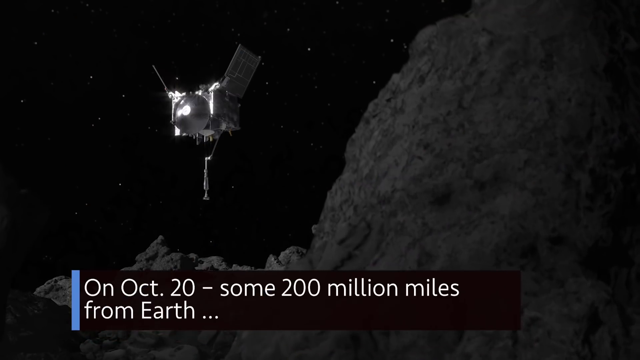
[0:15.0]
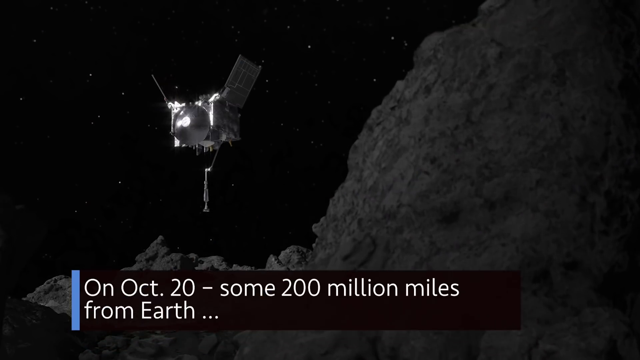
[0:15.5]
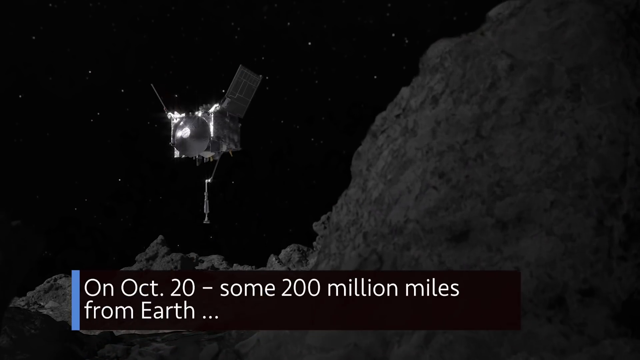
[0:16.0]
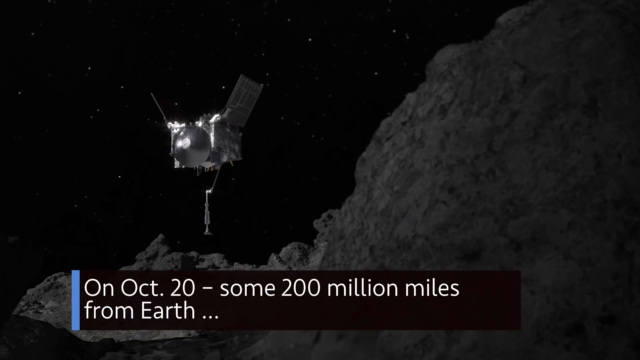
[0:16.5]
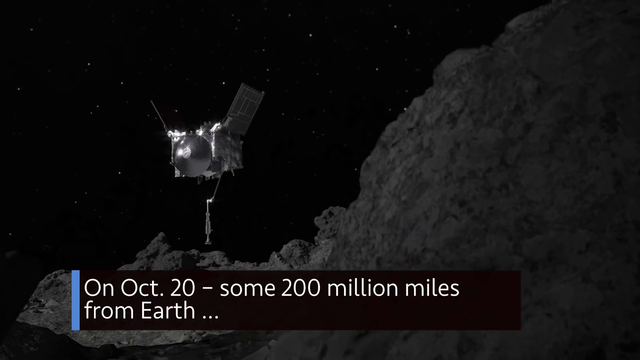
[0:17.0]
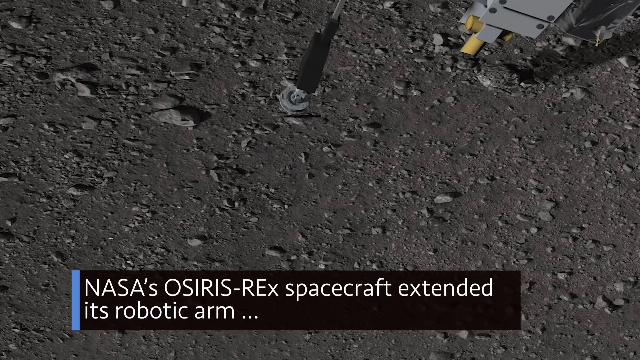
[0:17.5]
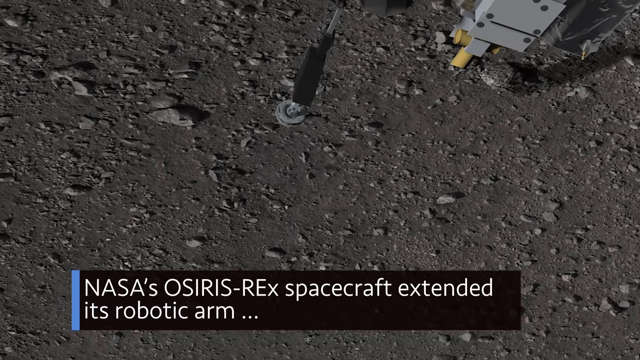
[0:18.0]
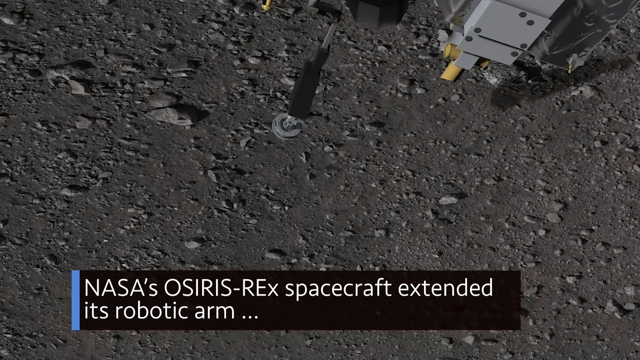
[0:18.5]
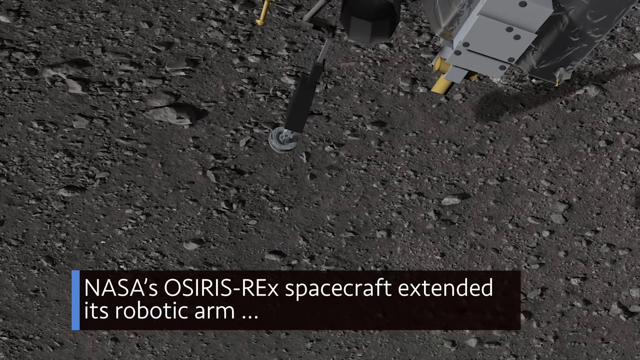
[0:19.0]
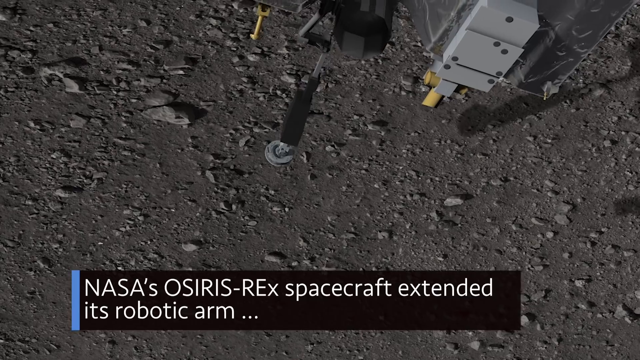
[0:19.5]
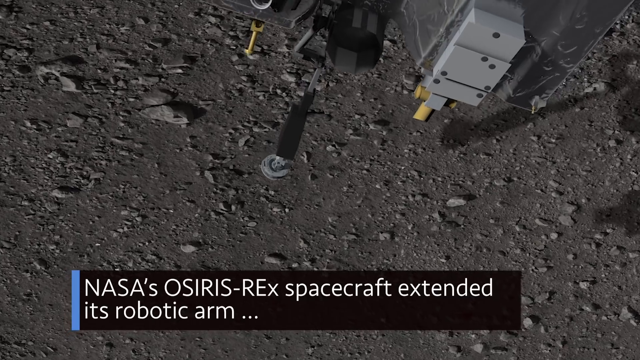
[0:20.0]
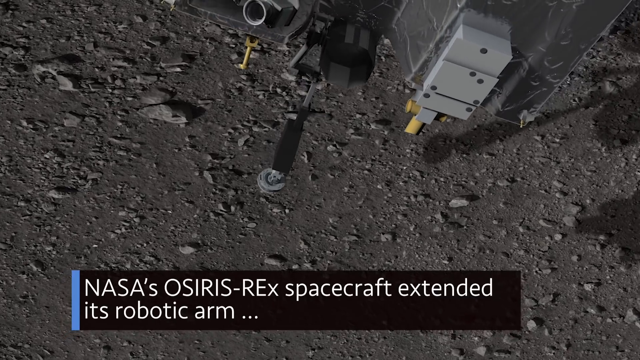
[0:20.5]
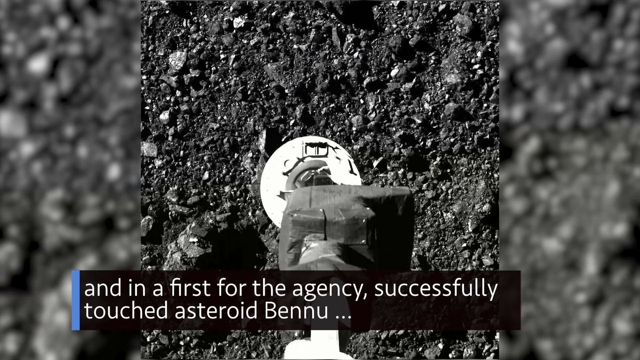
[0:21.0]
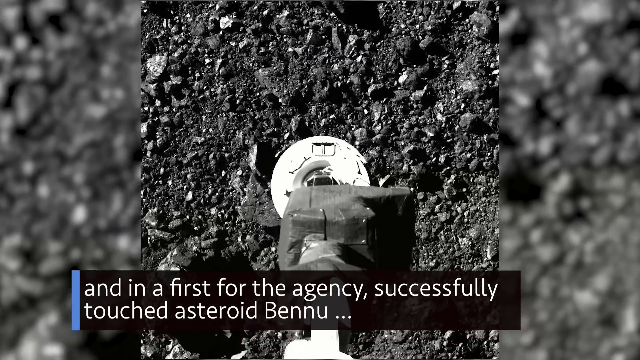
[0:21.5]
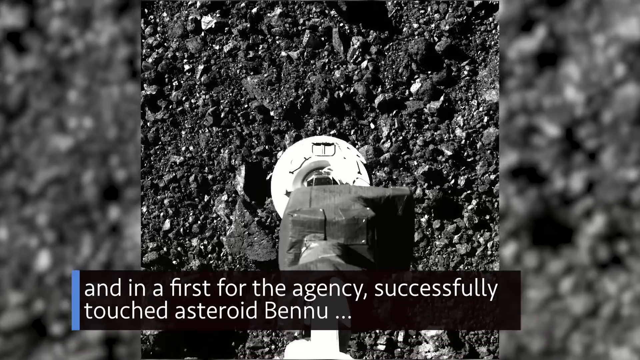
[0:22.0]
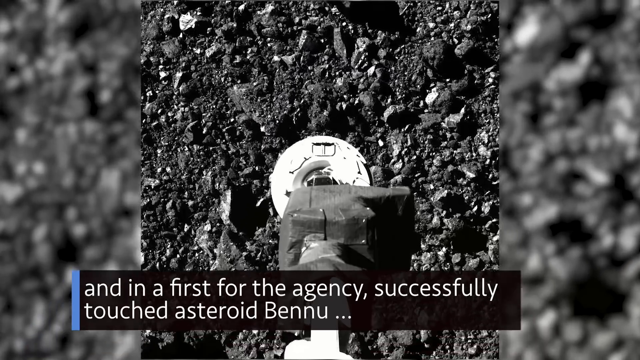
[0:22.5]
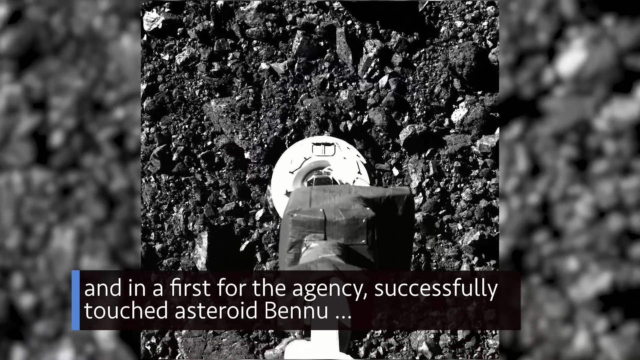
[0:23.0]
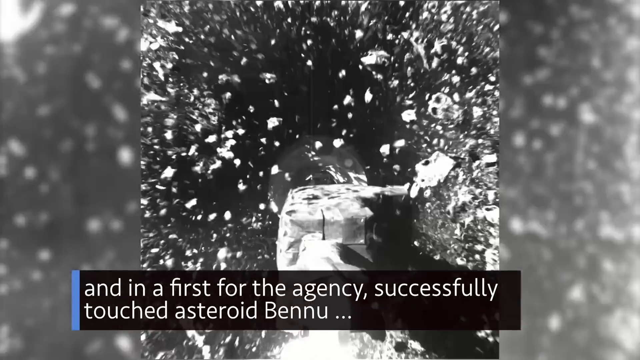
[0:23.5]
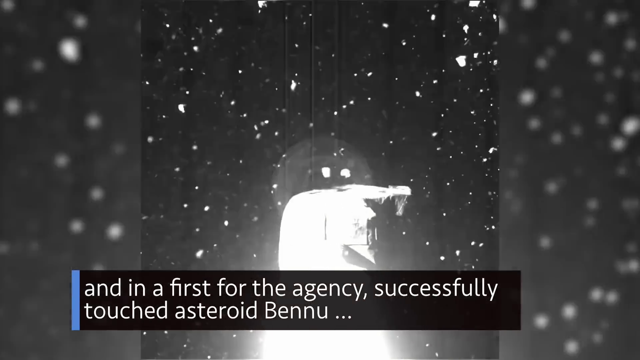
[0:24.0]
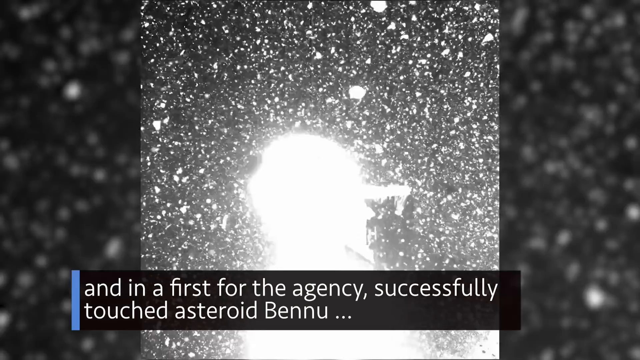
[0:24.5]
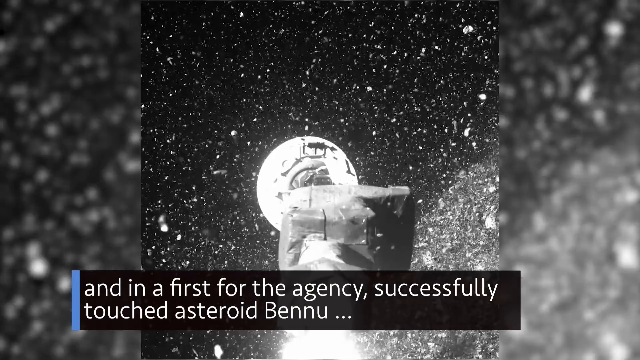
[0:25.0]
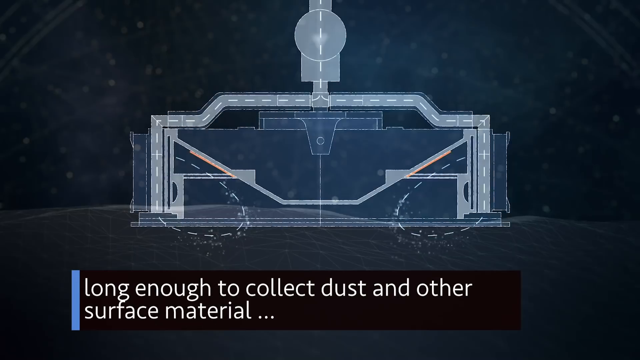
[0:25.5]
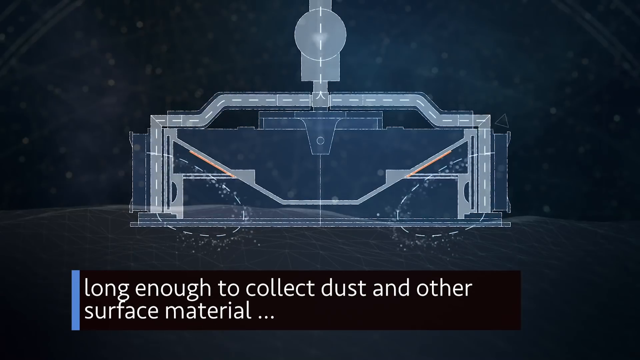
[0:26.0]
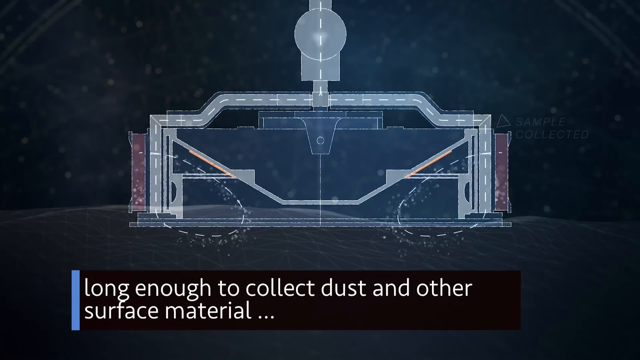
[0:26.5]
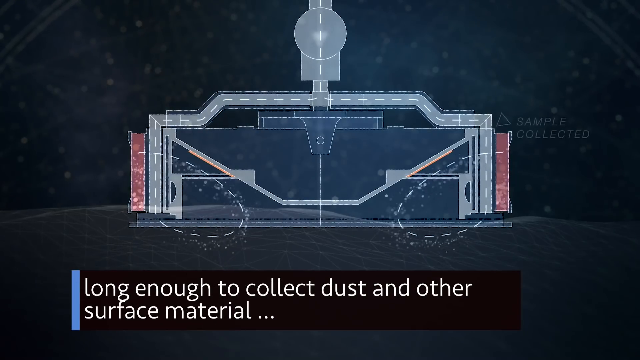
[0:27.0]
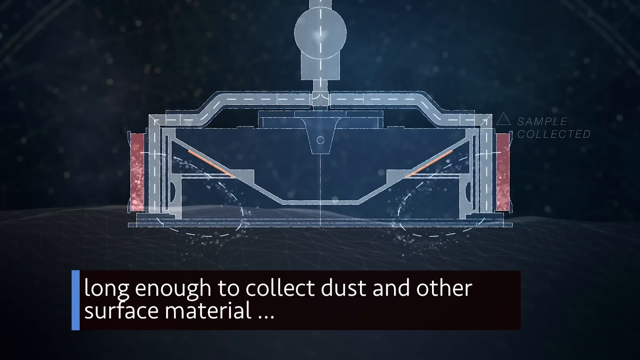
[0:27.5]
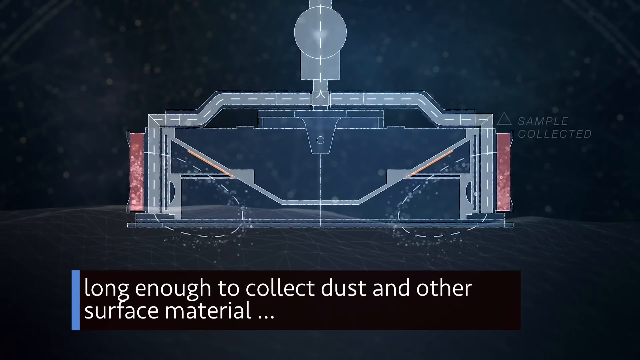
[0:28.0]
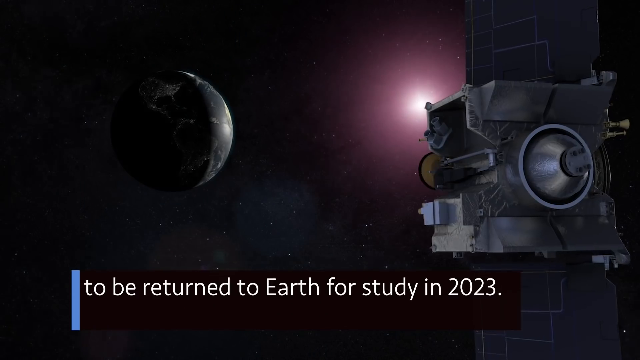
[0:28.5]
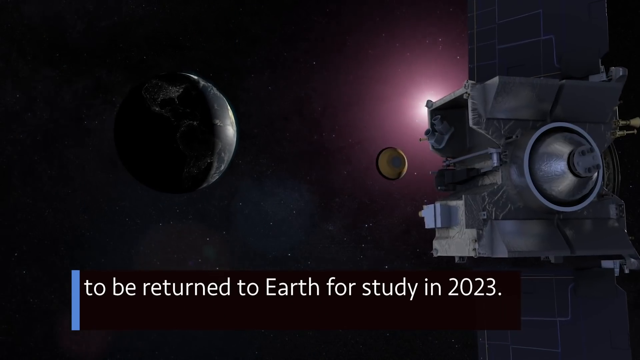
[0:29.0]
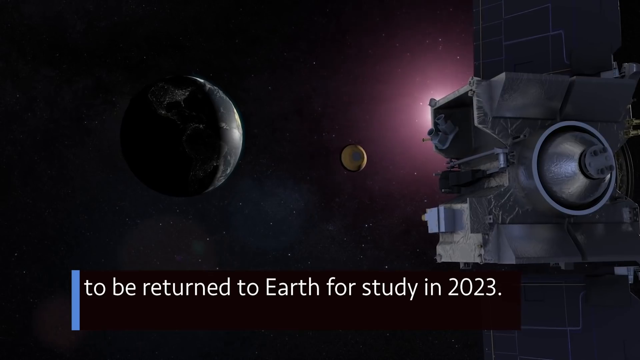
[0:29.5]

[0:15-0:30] The scene shows a mission to collect samples from an asteroid in outer space, in clearer detail. The spaceship lifts off and lands on the asteroid. A caption and a diagram show that the instrument that goes into the asteroid extends very deep into it to collect samples. Another caption states that the spaceship is over 200 miles away from Earth. No people appear, only the planet Earth, the spaceship and the asteroid, with a vast number of stars in the background.